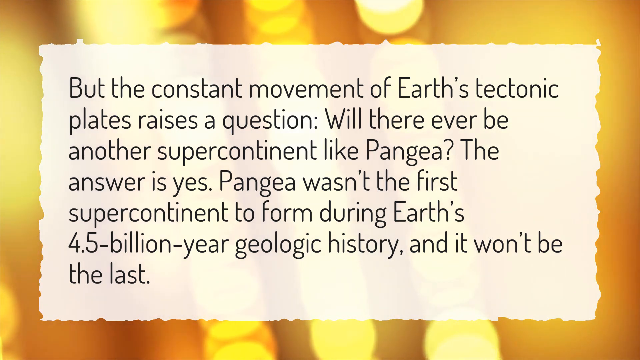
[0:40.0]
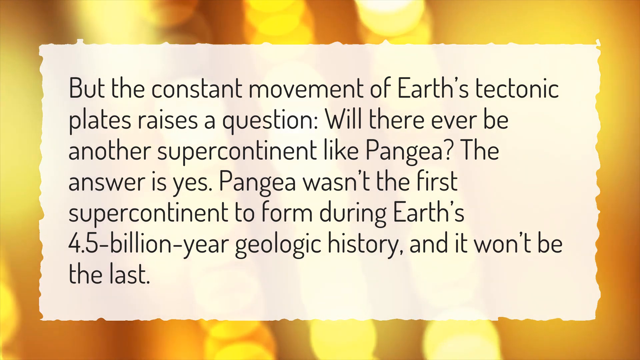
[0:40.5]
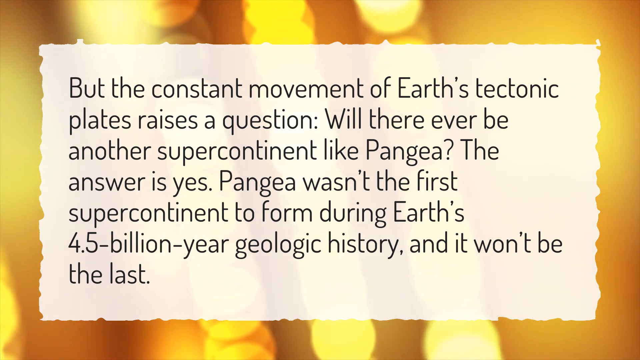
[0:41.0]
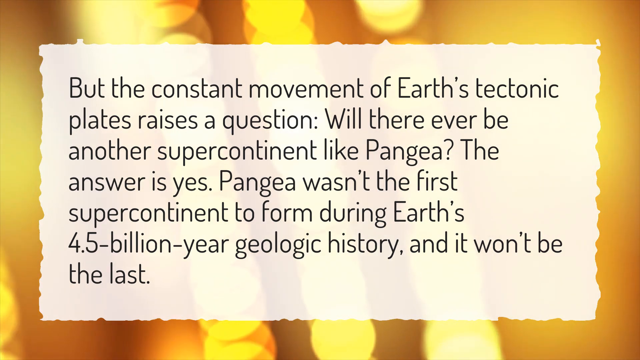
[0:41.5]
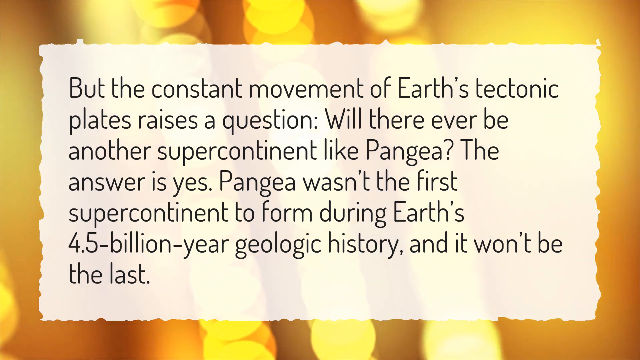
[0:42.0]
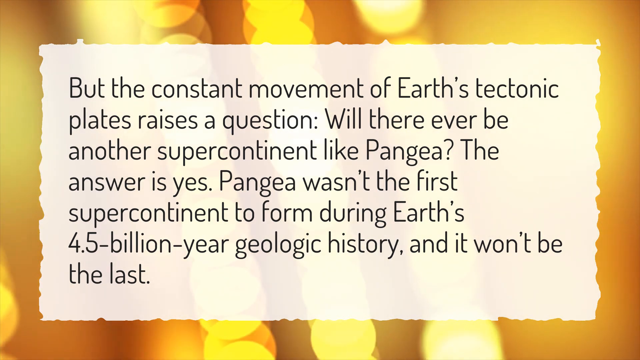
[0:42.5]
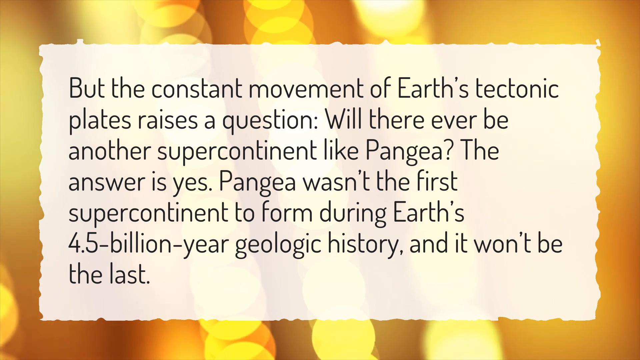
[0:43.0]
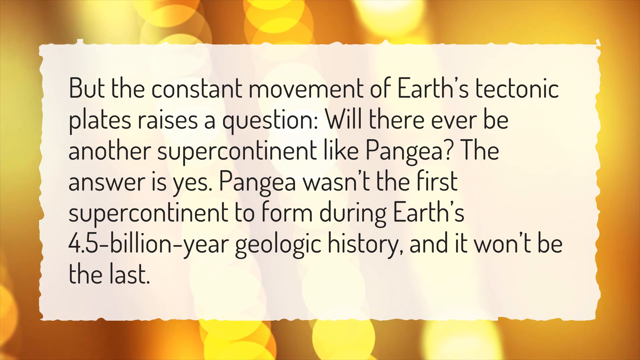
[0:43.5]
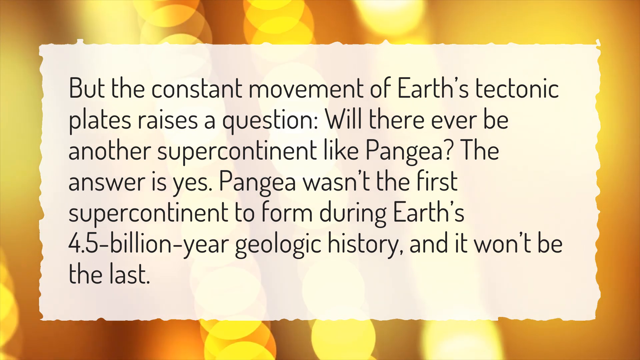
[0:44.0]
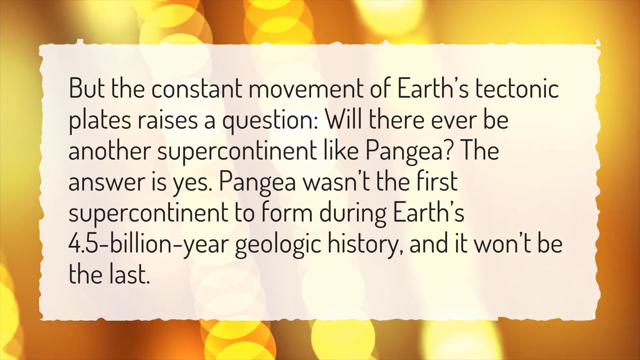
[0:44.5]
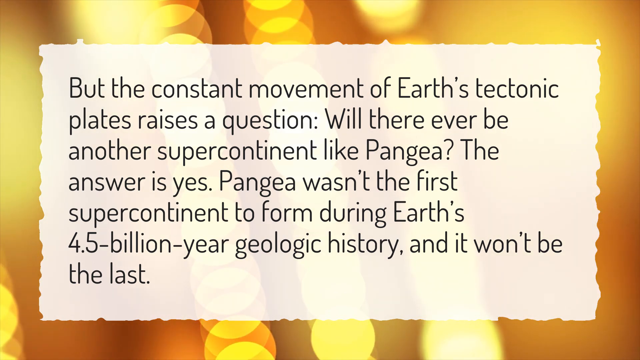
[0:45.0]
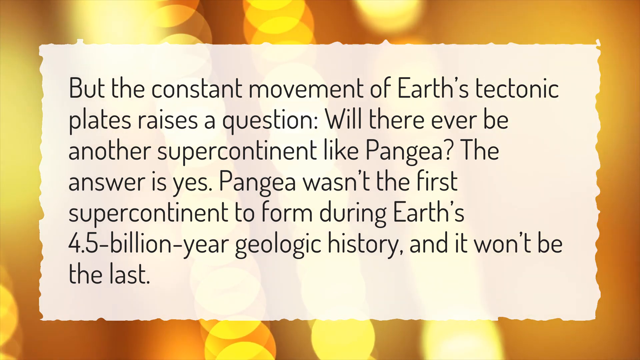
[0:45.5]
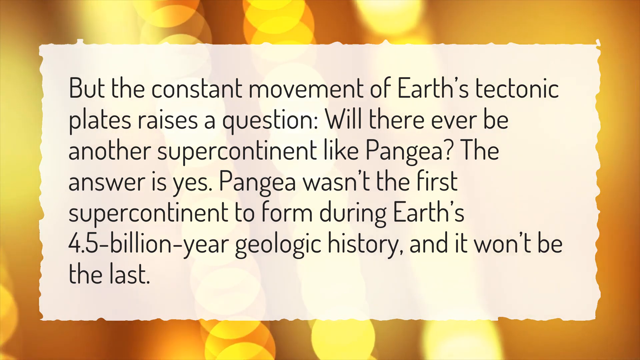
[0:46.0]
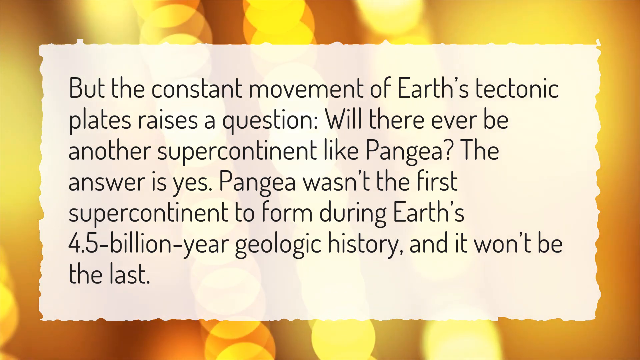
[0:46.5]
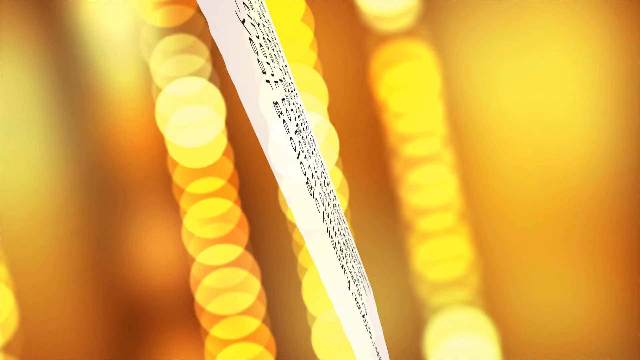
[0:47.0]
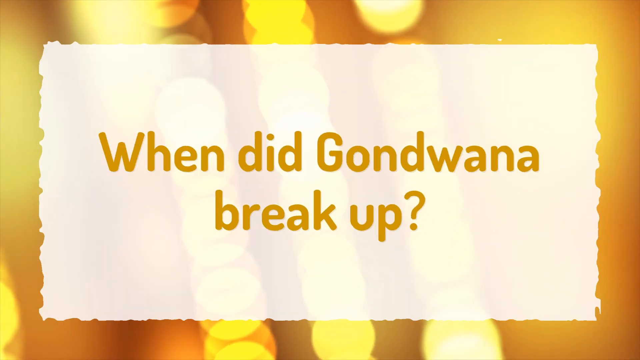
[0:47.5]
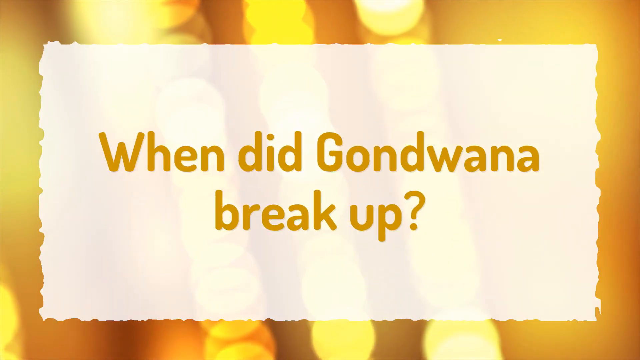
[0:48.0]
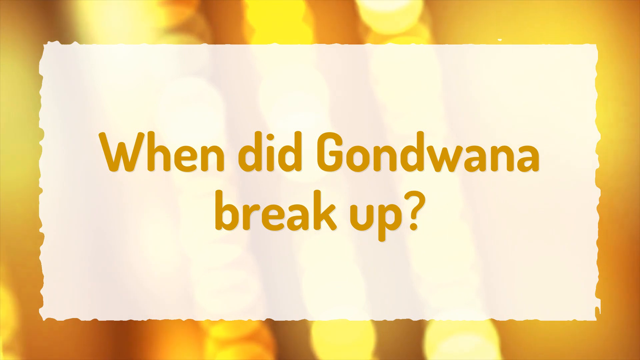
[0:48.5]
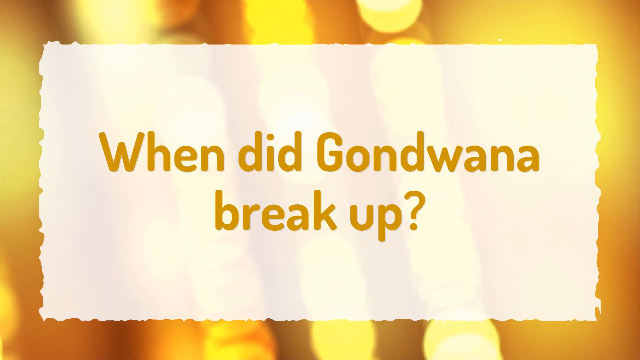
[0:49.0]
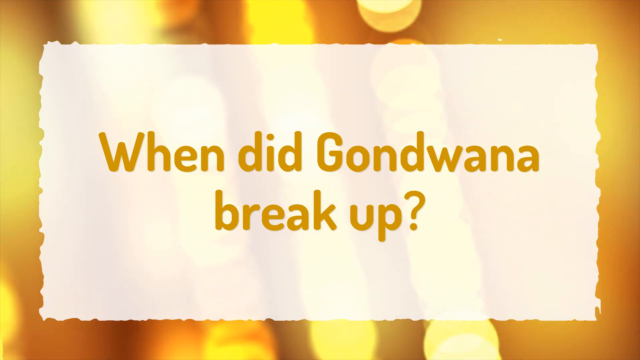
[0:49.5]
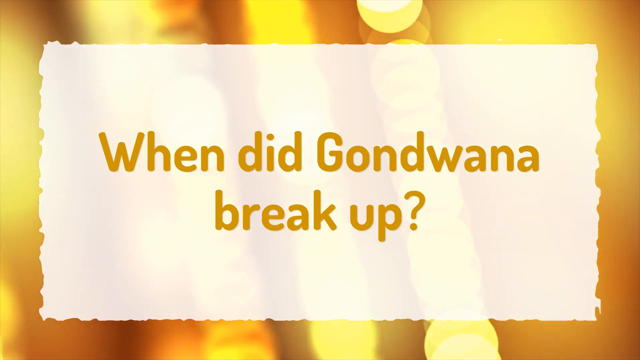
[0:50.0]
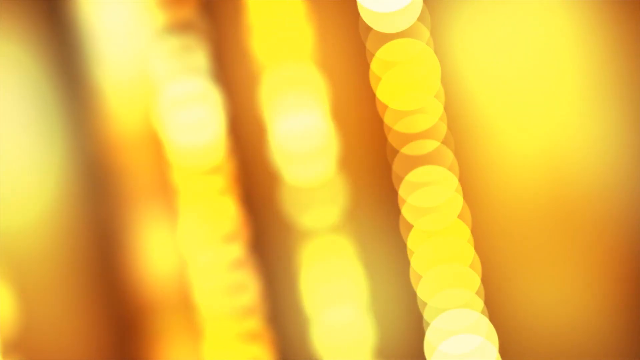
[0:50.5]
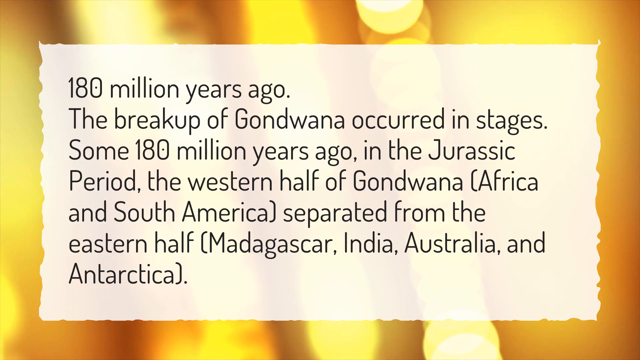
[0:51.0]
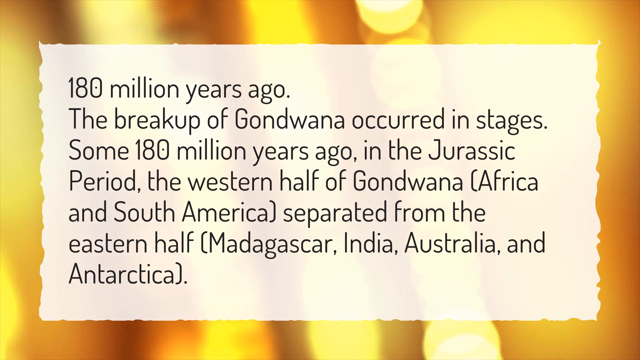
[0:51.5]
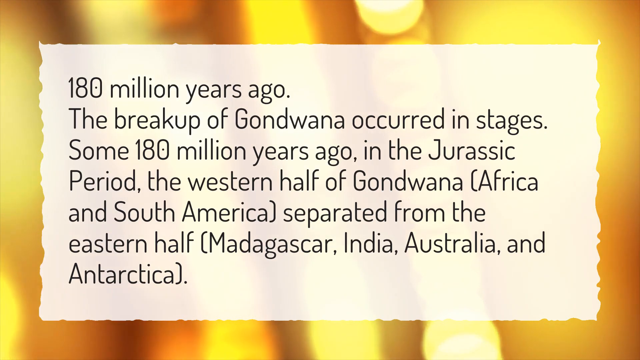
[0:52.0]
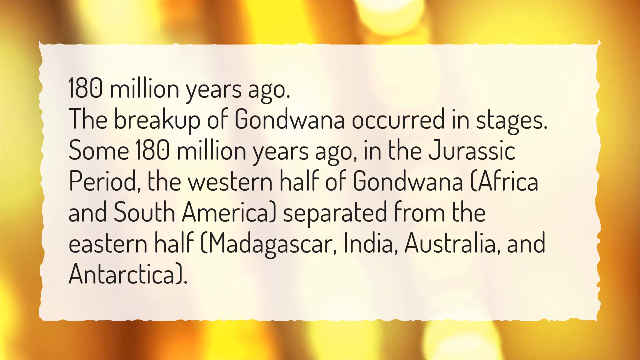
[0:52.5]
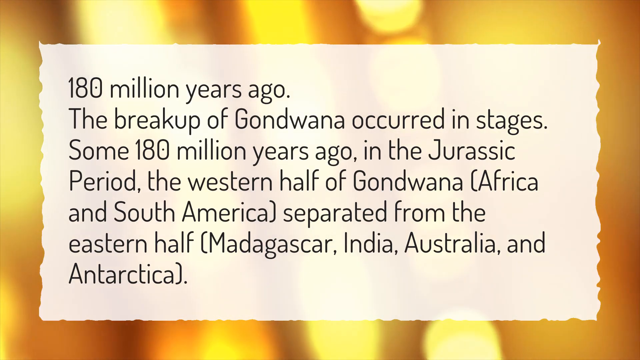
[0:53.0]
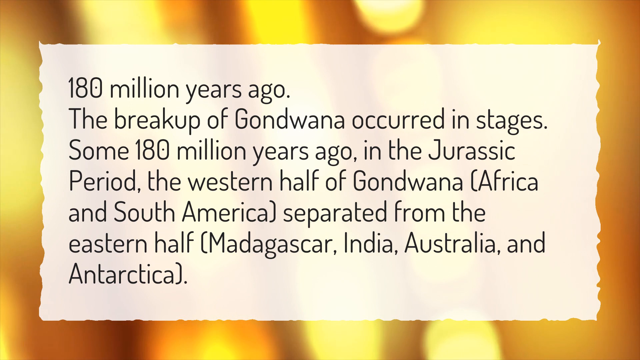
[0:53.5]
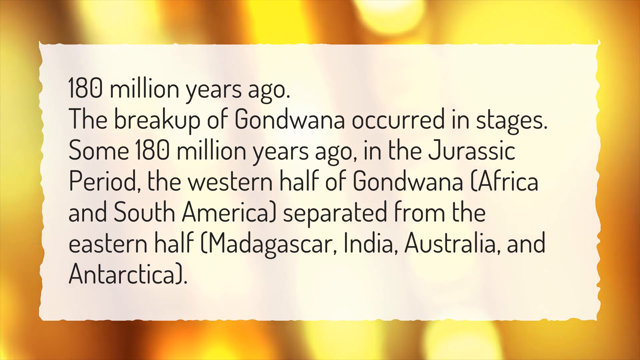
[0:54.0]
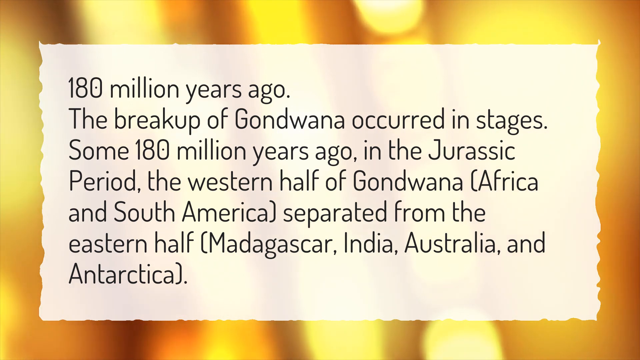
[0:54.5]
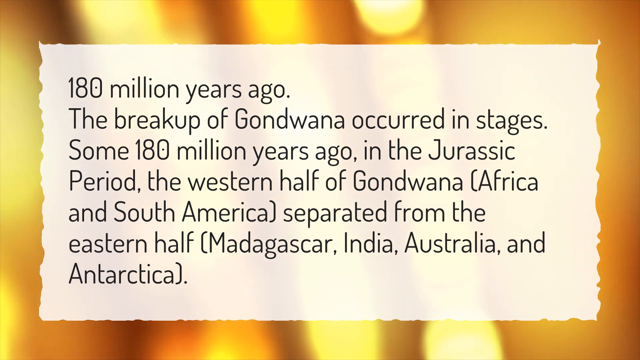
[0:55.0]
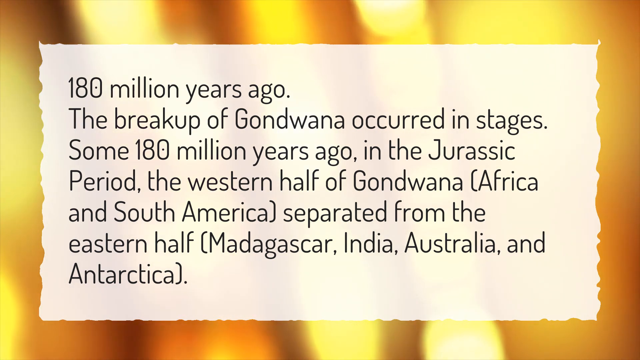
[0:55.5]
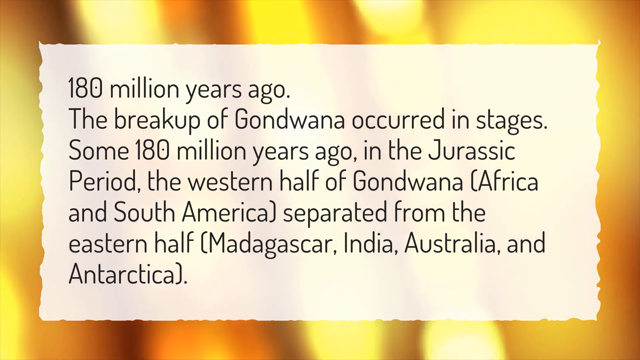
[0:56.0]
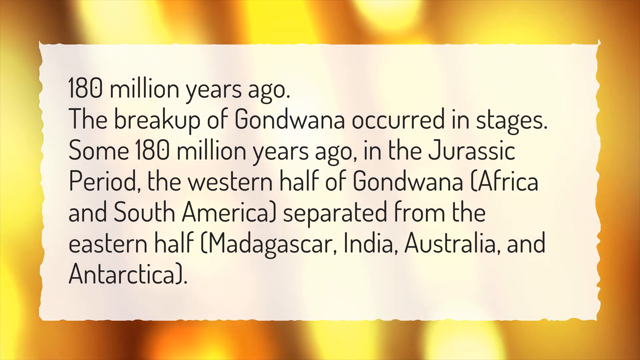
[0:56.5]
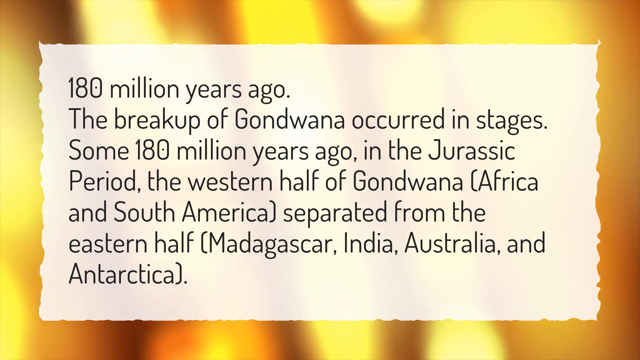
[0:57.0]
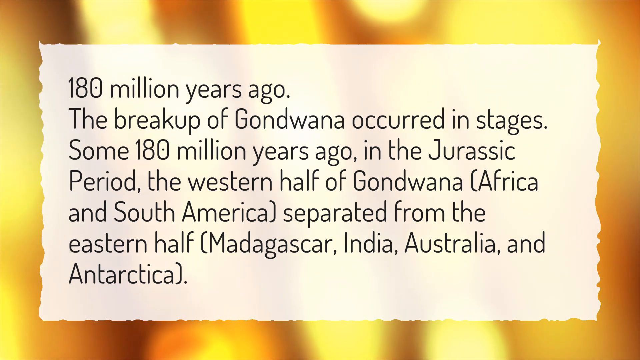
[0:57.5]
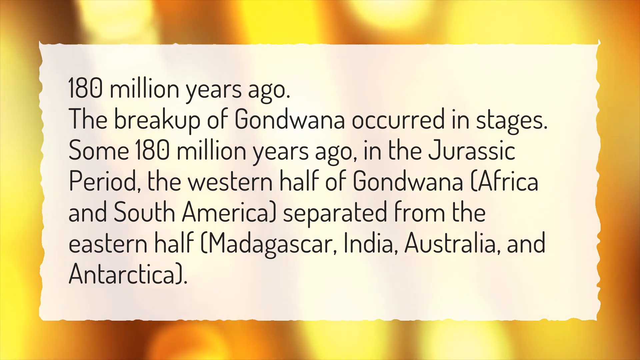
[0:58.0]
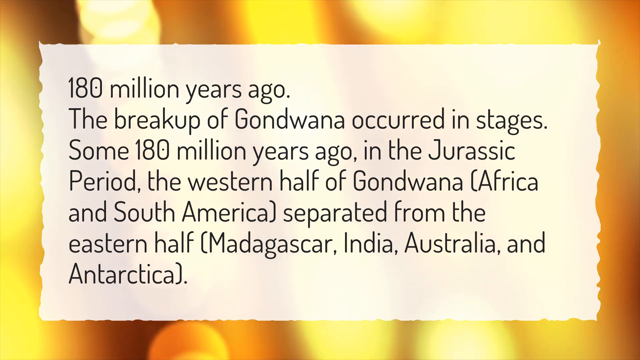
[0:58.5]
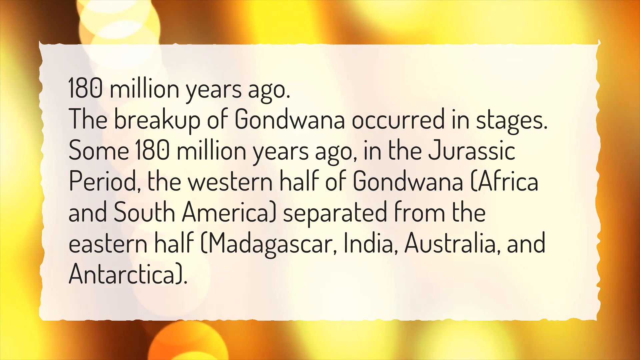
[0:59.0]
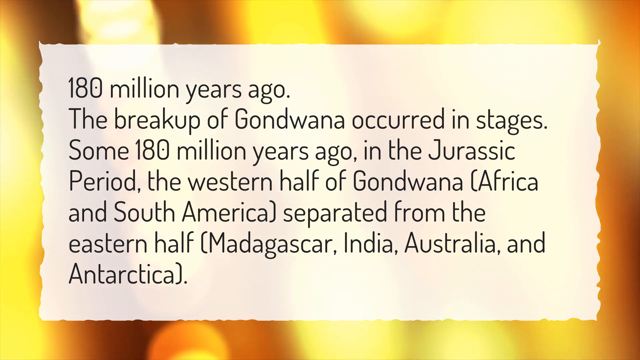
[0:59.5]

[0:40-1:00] A presentation-style slide shows text that reads: "But the constant movement of Earth's tectonic plate raises a question. Will there ever be another supercontinent like Pangaea? The answer is yes. Pangaea wasn't the first supercontinent to form on Earth's 4.5 billion year geologic history, and it won't be the last." The video then transitions to another slide posing the question "When did Gondwana break up?" with the text: "180 million years ago, the breakup of Gondwana occurred in stages. Some 180 million years ago, in the Jurassic period, the western half of Gondwana, Africa and South America, separated from the eastern half, Madagascar, India, Australia, and Antarctica."